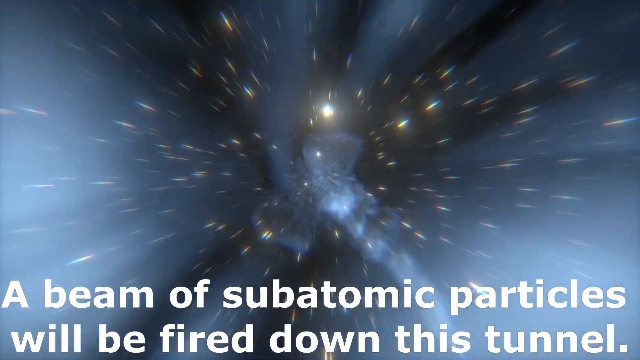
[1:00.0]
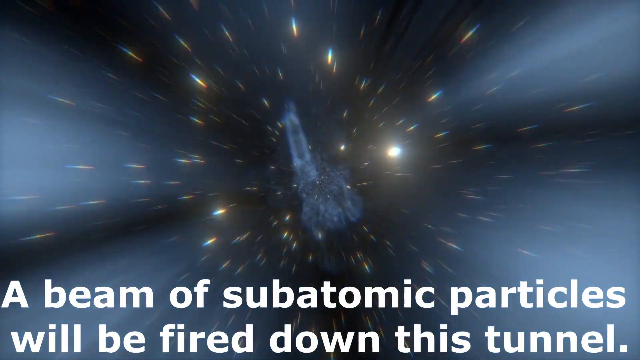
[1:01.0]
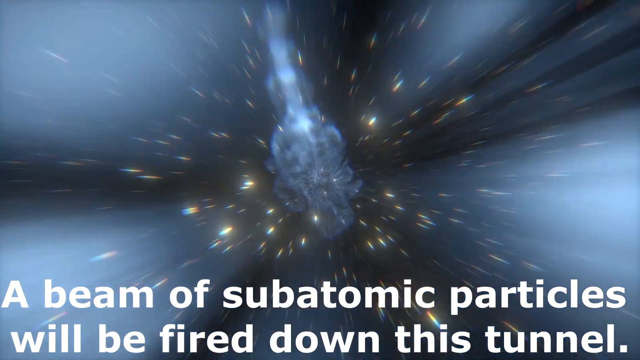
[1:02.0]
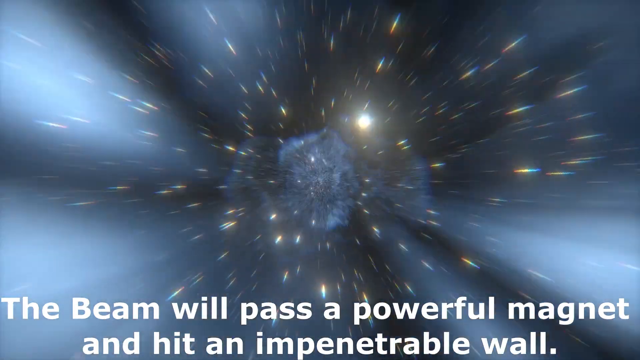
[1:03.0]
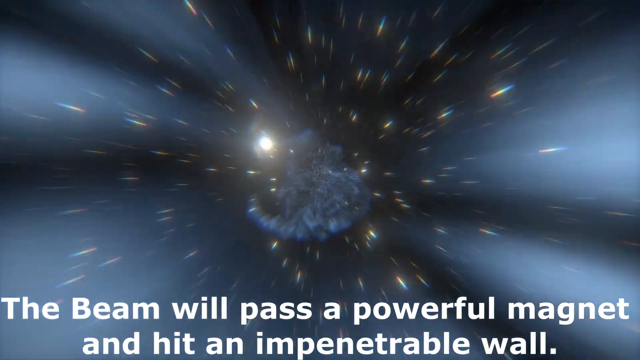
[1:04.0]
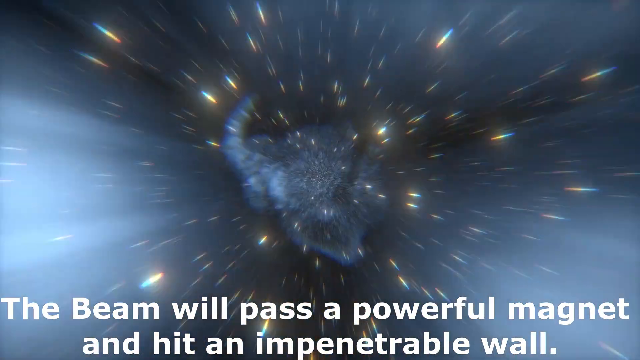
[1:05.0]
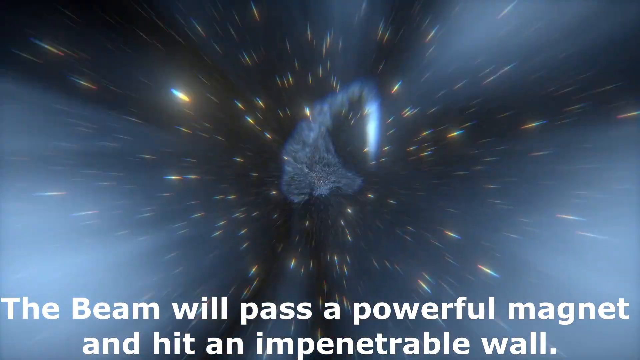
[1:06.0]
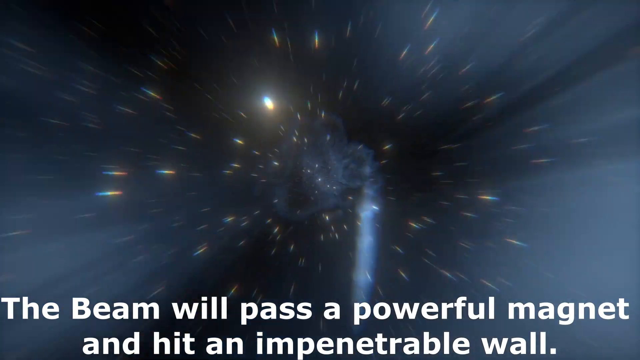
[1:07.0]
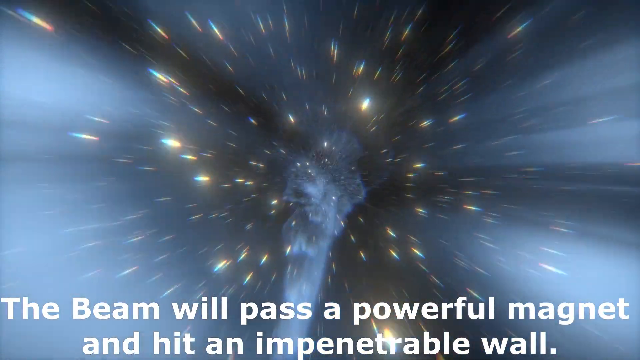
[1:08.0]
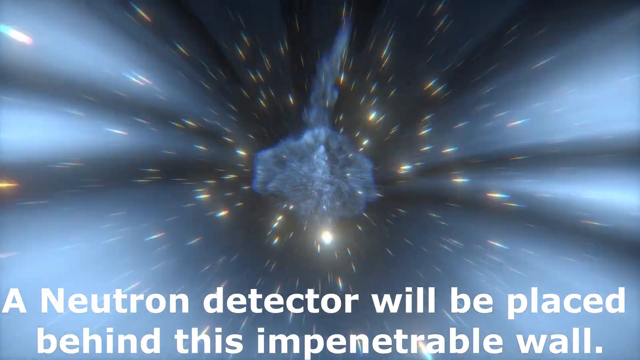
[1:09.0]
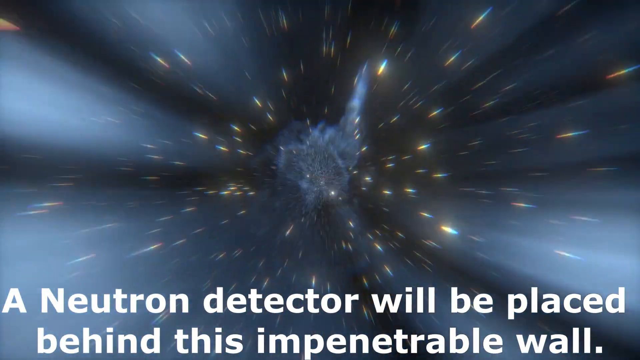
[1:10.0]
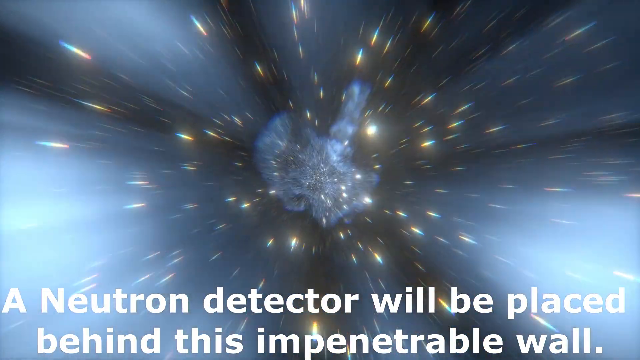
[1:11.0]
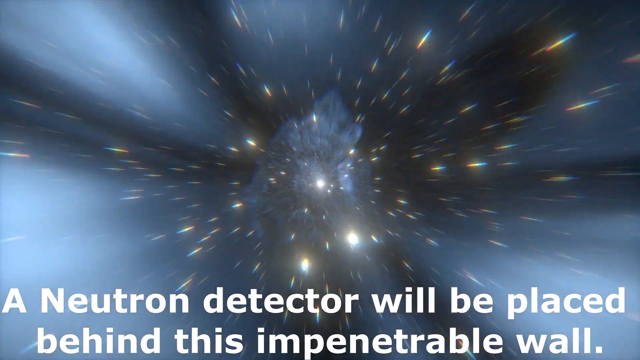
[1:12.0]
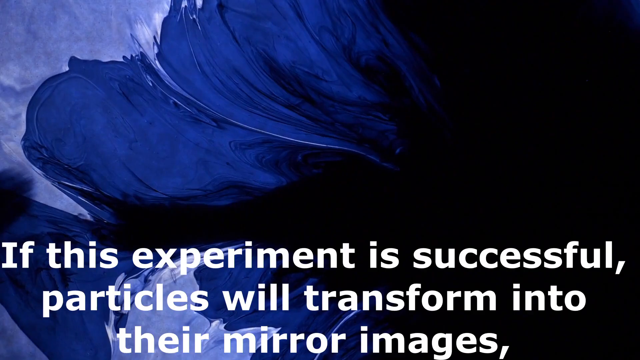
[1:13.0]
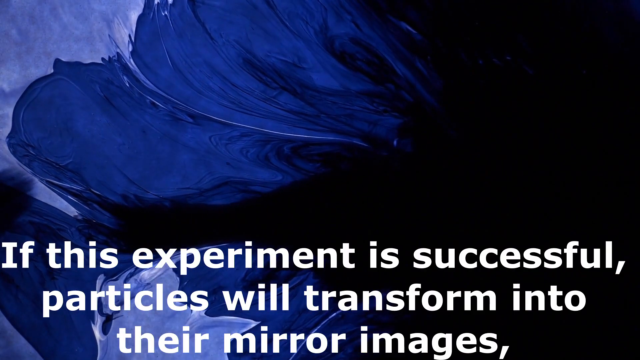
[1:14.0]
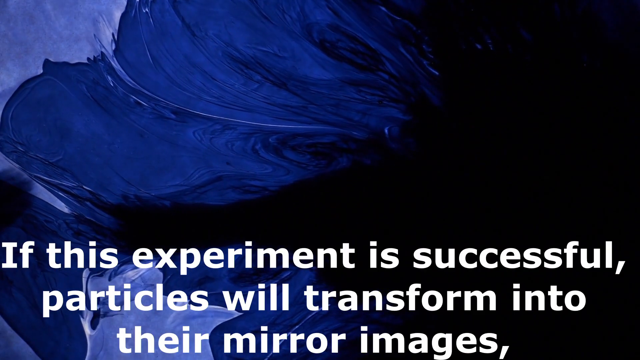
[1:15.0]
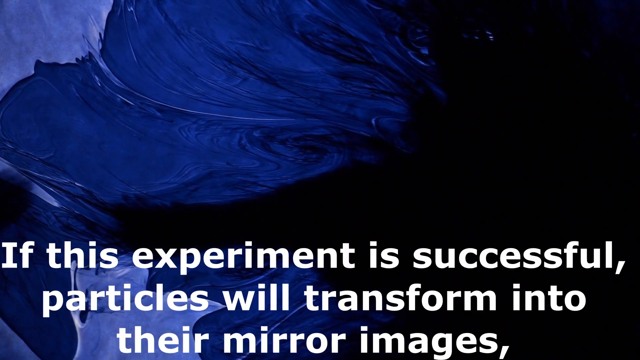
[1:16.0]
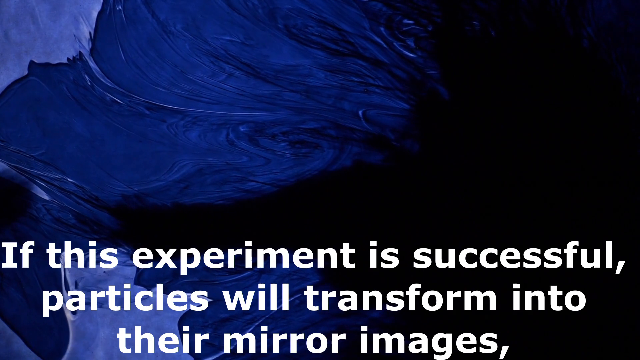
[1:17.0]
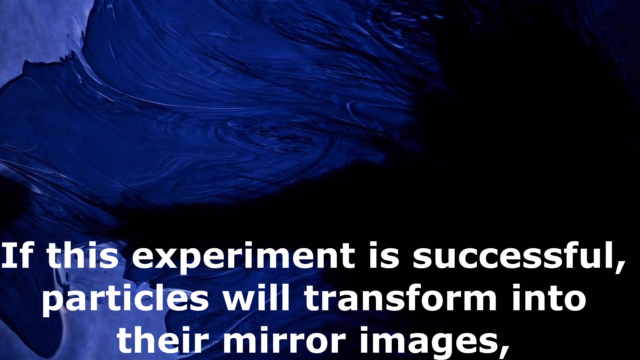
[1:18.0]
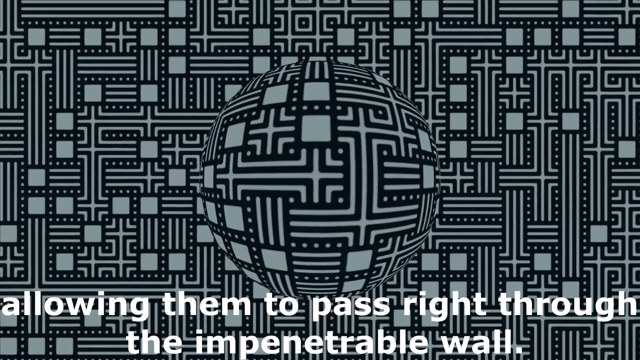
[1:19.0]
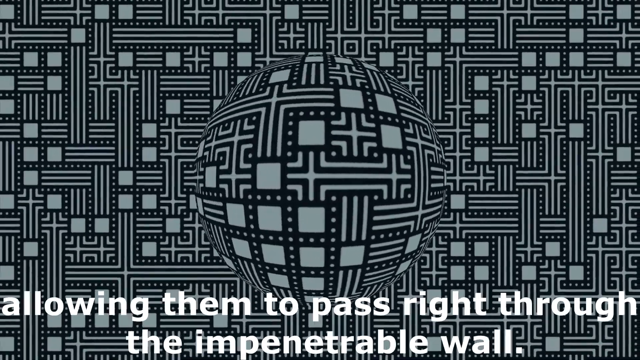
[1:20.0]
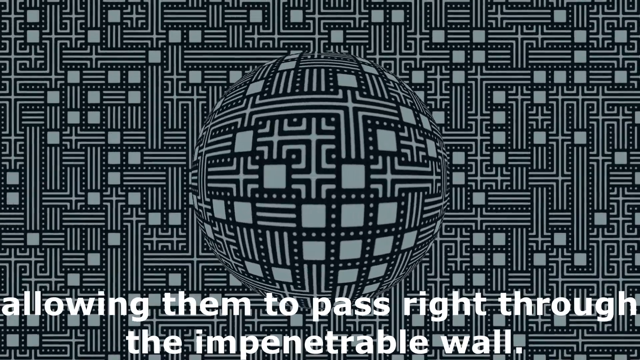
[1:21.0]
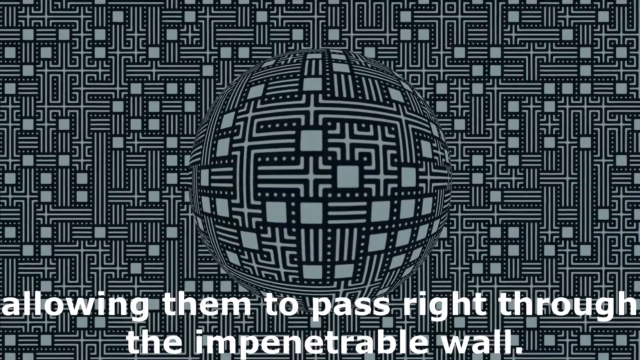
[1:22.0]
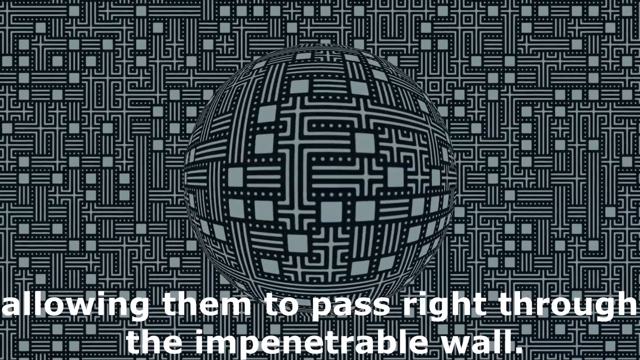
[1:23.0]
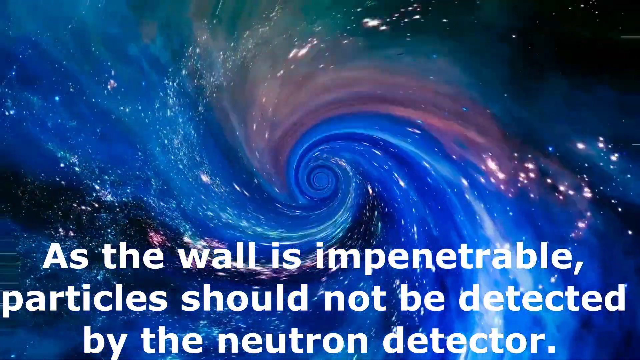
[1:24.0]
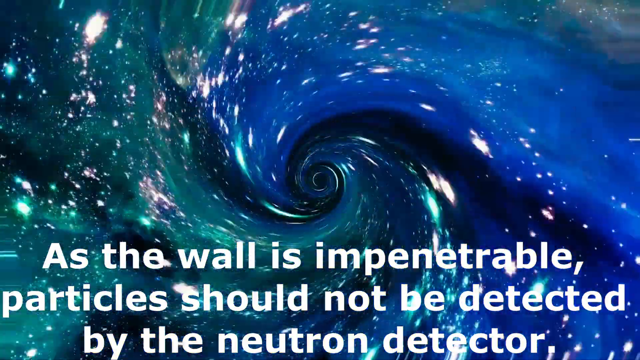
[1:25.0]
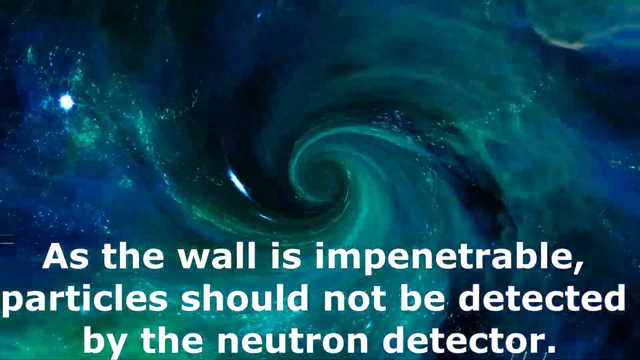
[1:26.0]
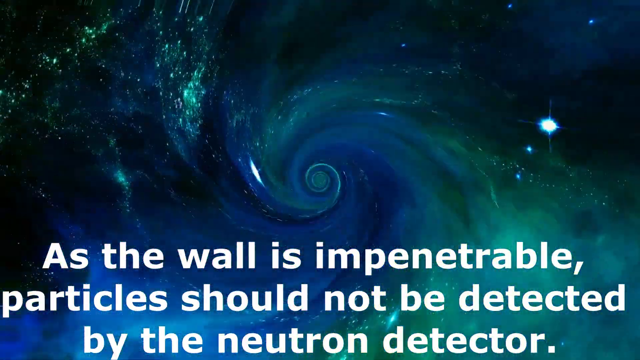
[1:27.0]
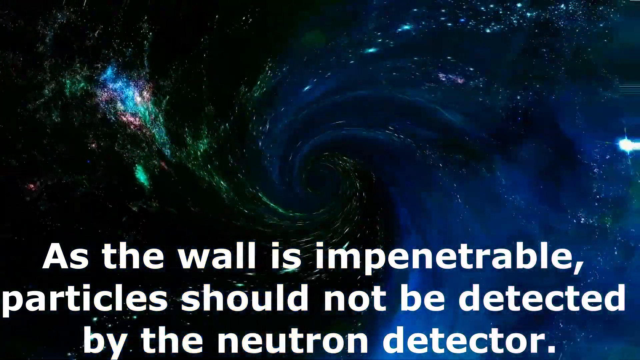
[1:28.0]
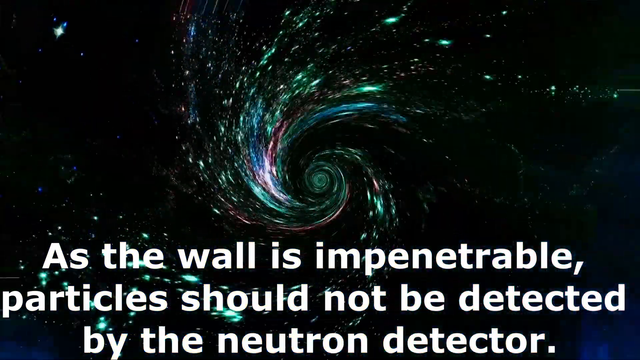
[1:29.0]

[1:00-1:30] It looks like the view is traveling through a portal, floating very fast through some sort of wormhole in space, with many little pieces of light passing by. The captions at the bottom read: "the beam will pass a powerful magnet and hit an impenetrable wall," then change to: "a Neutron detector will be placed behind this impenetrable wall." The view still looks like it is going through a wormhole or tunnel. A different scene then shows a big giant dark blue cloud on the left side, and the captions change to: "if this experiment is successful particles will transform into their mirror images." Next comes a black and white maze-like pattern with a big giant circle, a sphere, rotating in the middle, and the captions change to: "allowing them to pass right through." Then a spiral appears in the center, like the spiral of a galaxy, in turquoise, blue and dark blue, with captions at the bottom reading: "as the wall is impenetrable, particles should not be detected by the neutron detector."